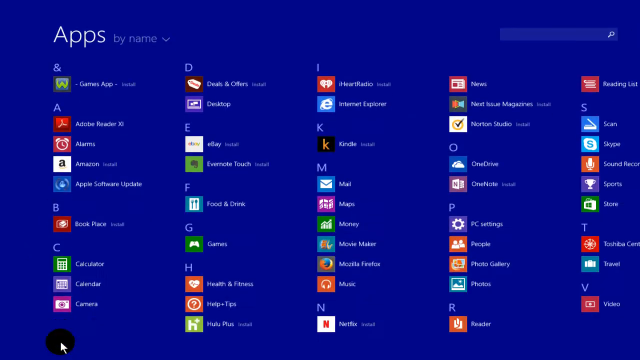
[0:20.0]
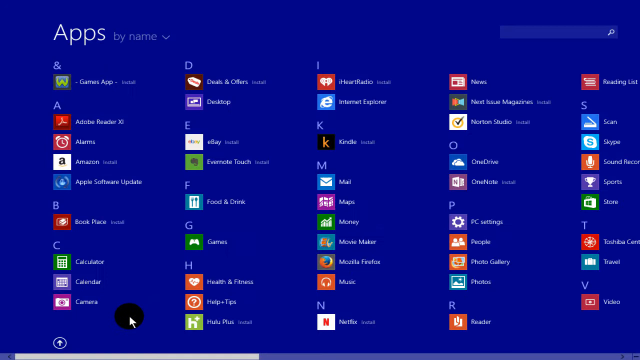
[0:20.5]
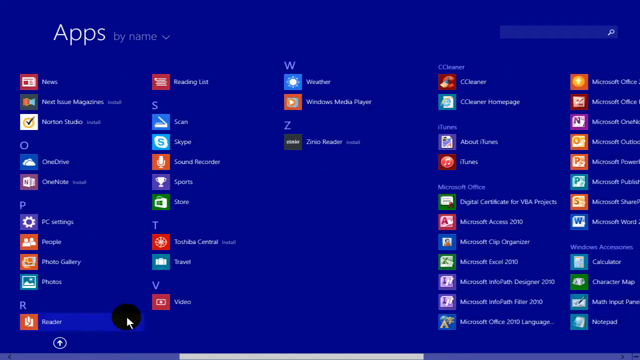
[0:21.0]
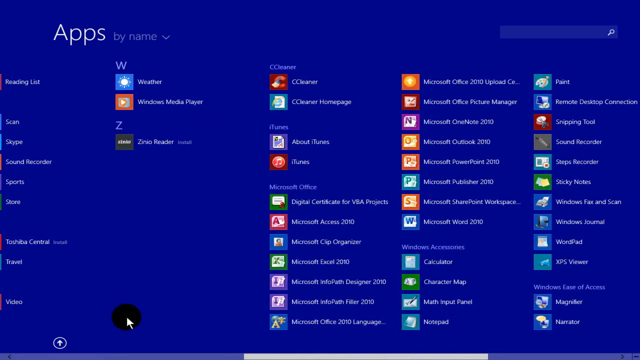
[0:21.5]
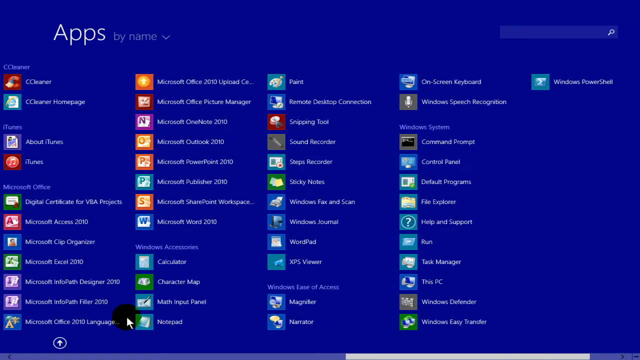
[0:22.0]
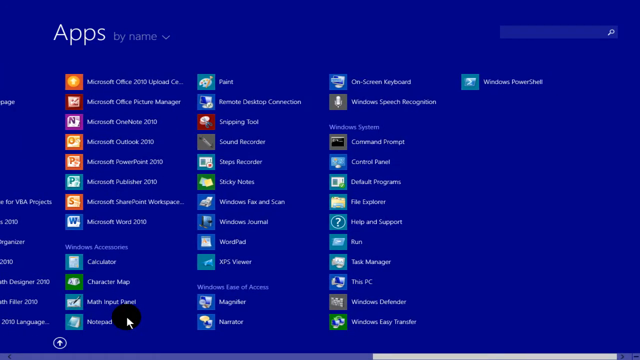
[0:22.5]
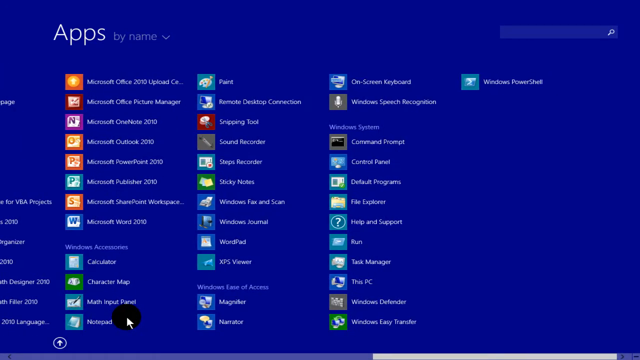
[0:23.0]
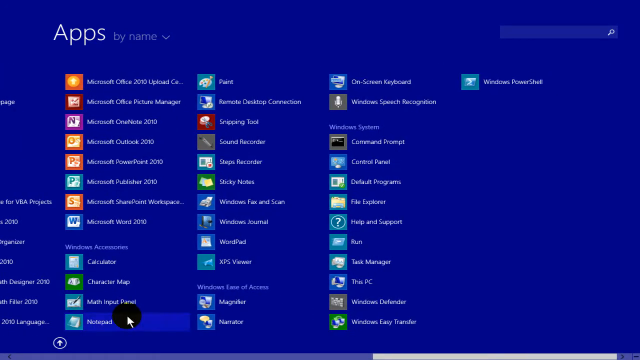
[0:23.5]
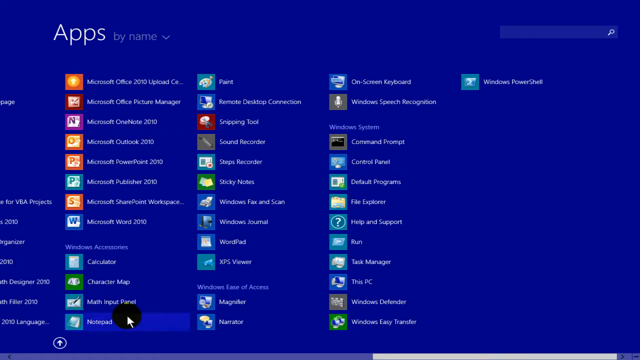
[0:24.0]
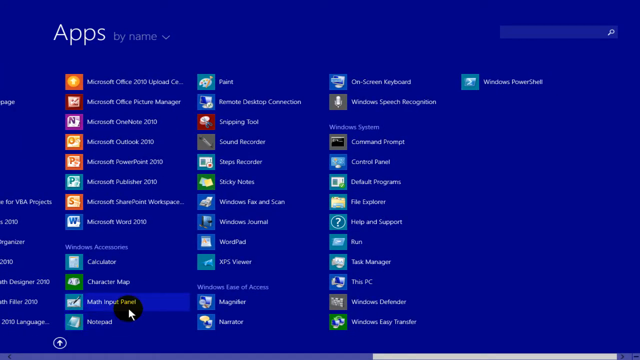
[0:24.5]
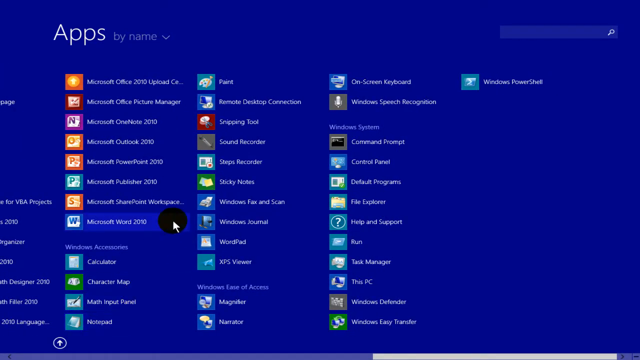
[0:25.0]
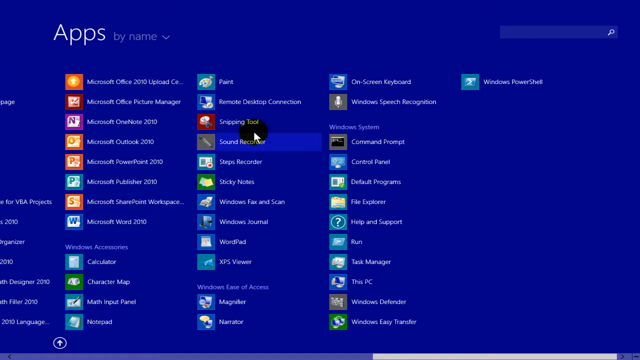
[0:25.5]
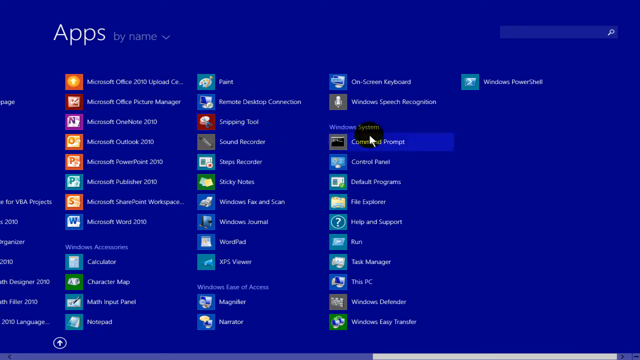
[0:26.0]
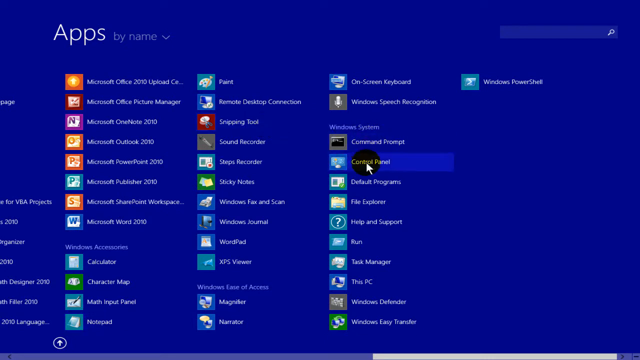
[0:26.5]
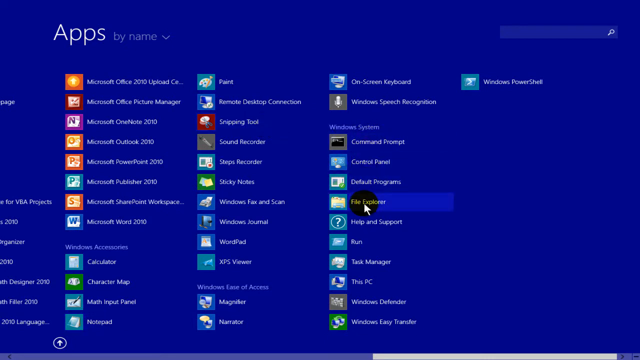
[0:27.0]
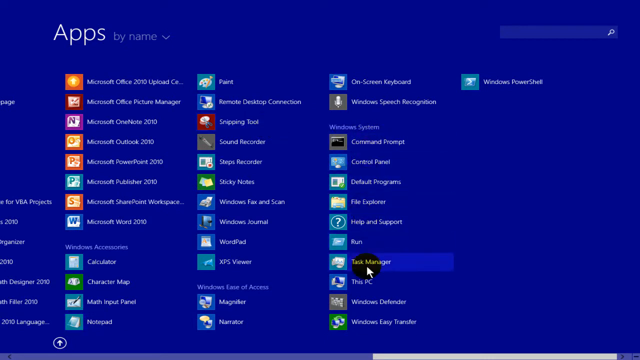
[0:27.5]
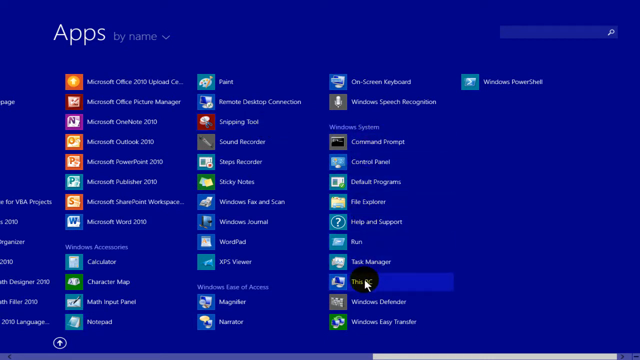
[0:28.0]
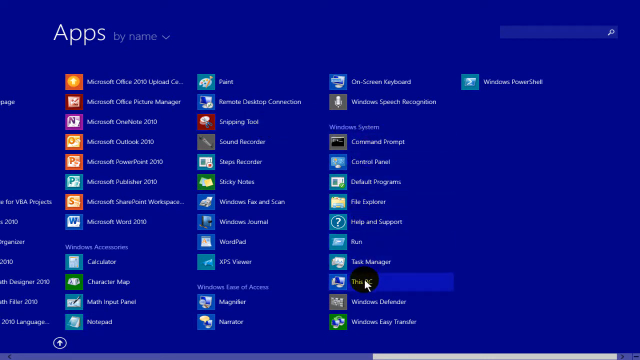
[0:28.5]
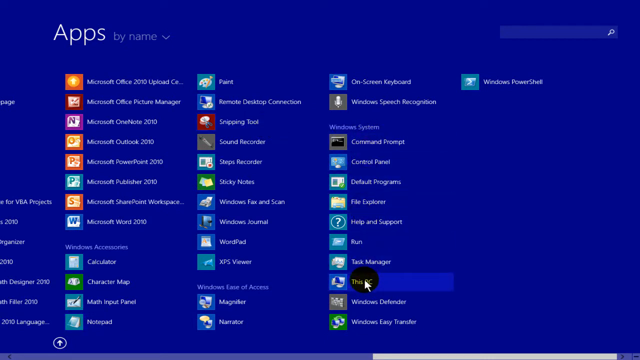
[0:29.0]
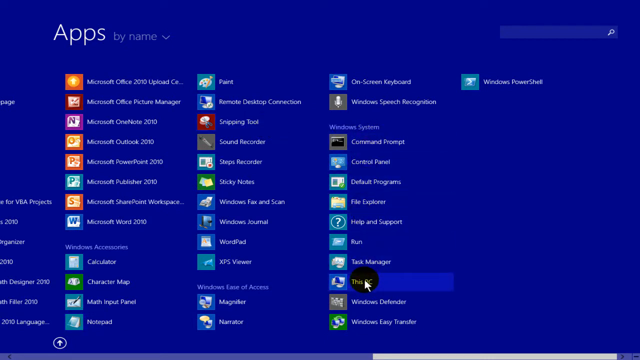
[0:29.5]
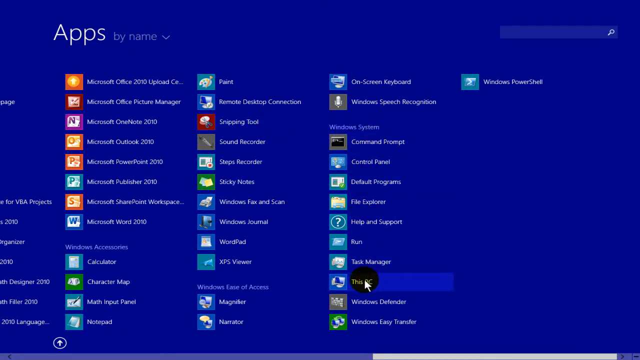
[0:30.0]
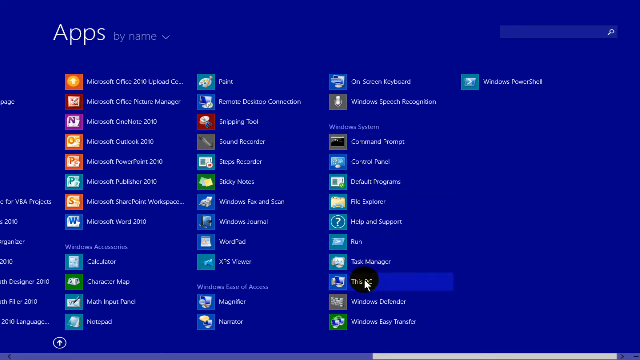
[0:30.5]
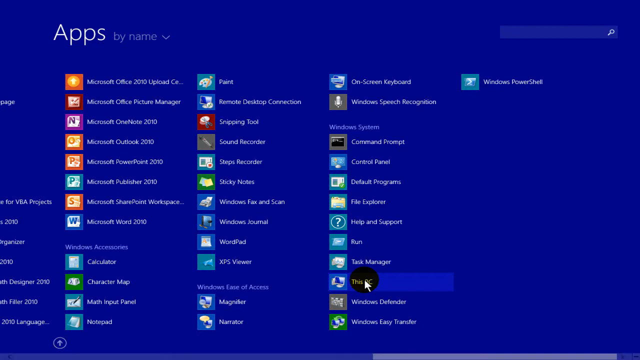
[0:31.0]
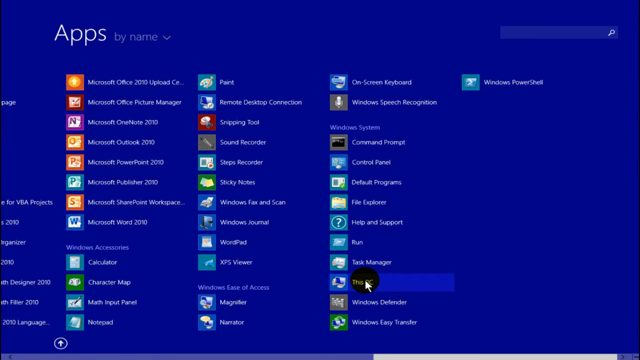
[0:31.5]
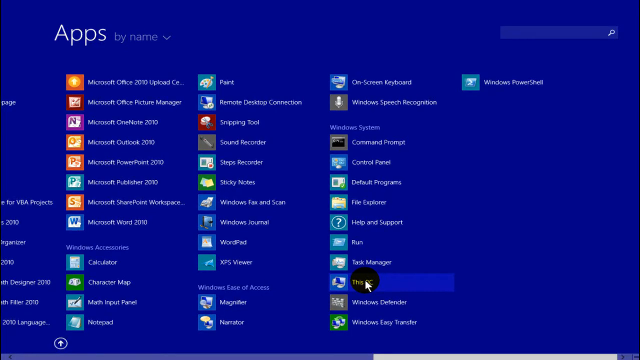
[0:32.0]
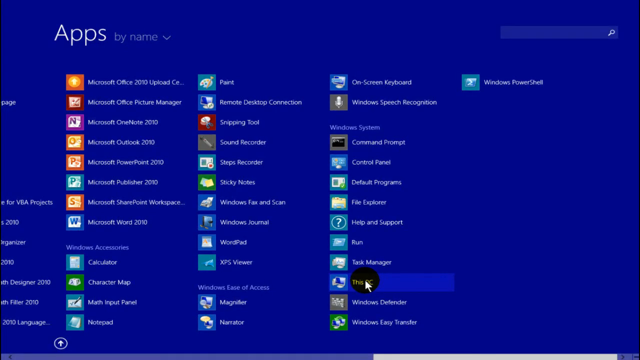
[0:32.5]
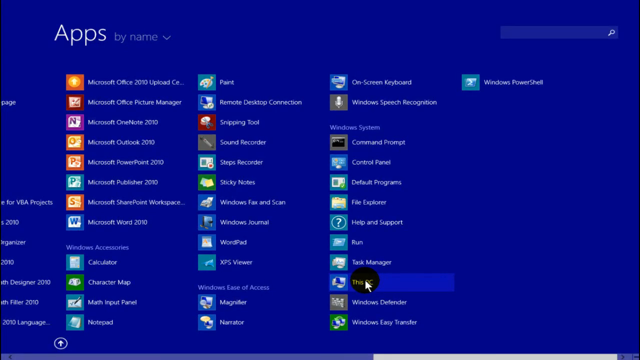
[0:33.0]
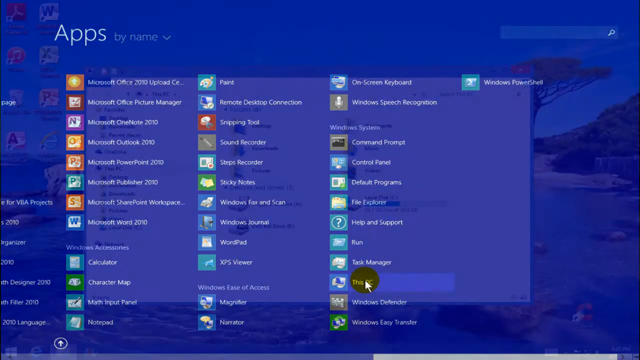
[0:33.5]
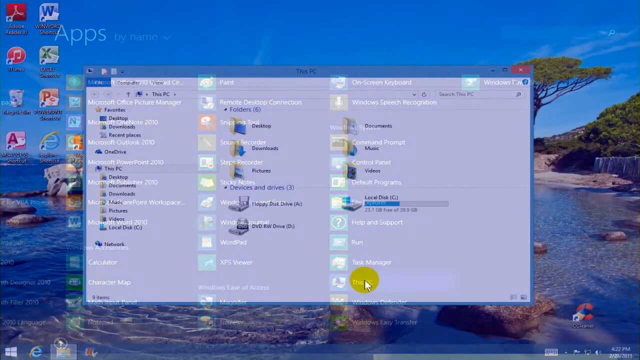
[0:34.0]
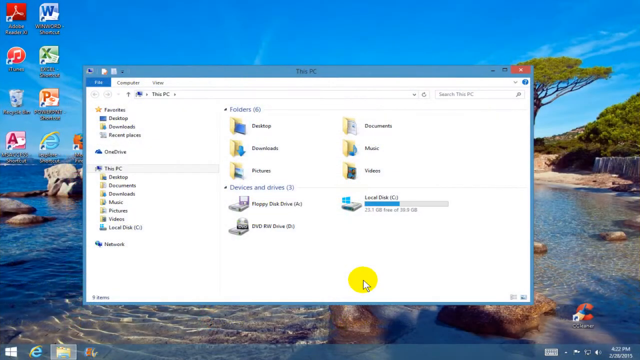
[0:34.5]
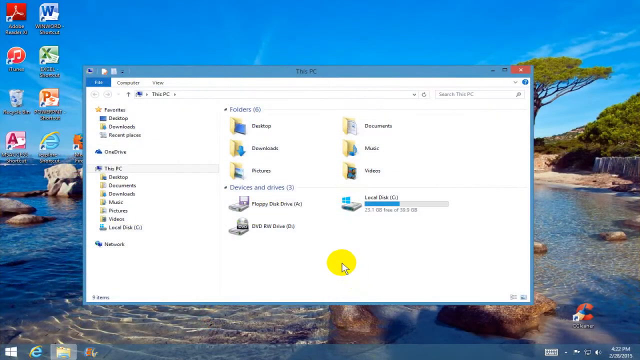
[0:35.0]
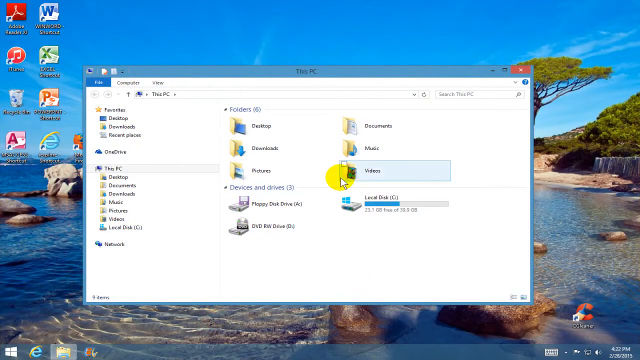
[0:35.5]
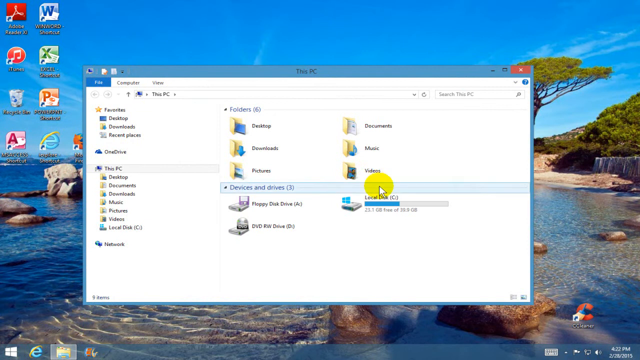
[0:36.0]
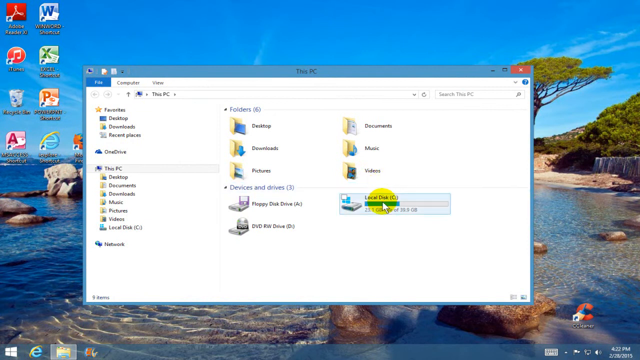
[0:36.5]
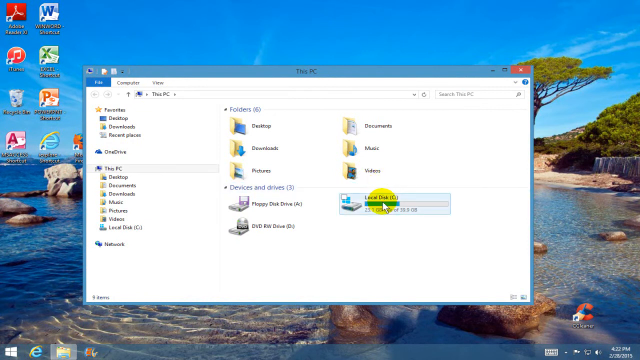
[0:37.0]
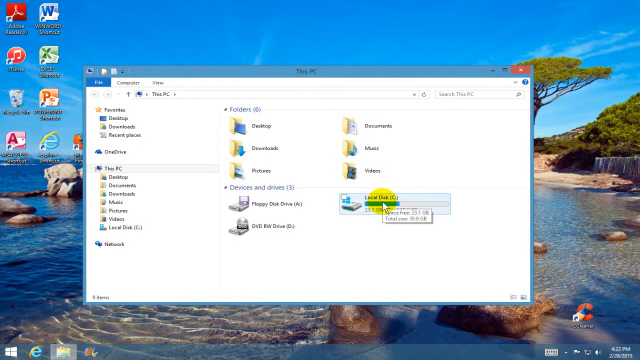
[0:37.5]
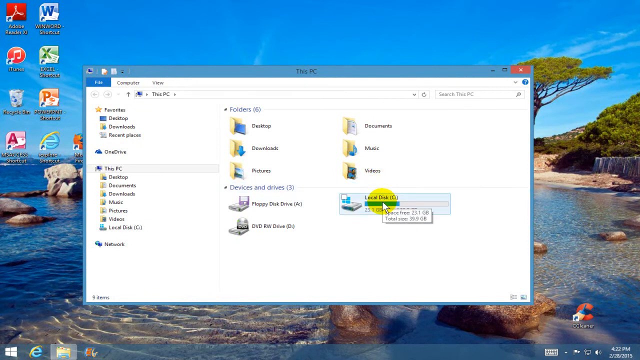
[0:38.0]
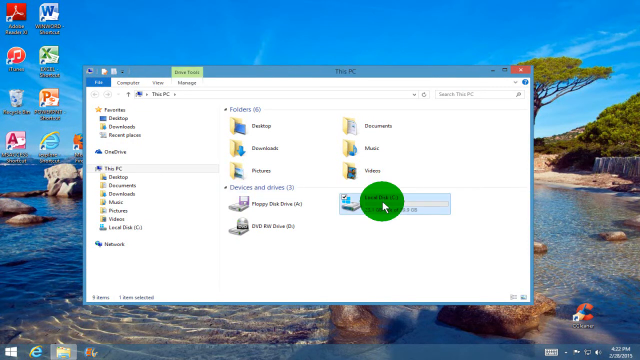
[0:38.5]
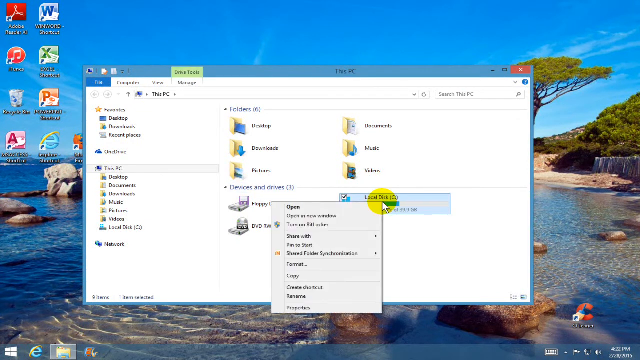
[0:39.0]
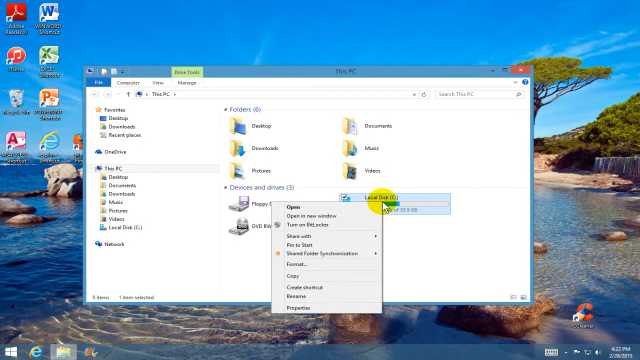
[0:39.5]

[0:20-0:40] On the Windows 8.1 operating system, the apps drawer is open, showing dozens of apps installed on the computer. The user scrolls to the left to find different software programs, then uses the mouse pointer to select This PC. When that box opens, it looks like a regular desktop rather than the Windows 8.1 desktop, apparently the beginning of the process of running a disk check. The user right-clicks on Local Disk C, which opens the right-click menu. Among the installed apps are recognizable ones such as iHeartRadio, the News app, Internet Explorer, Firefox and Adobe Reader, along with dozens of others.